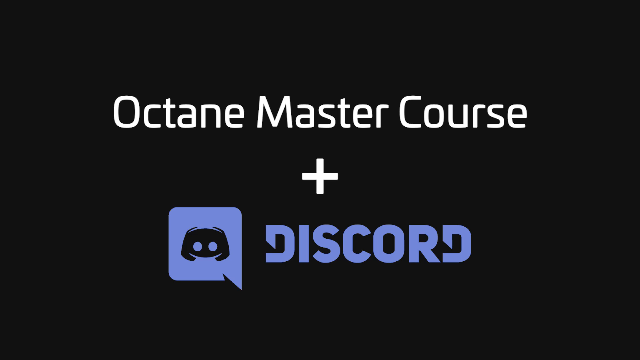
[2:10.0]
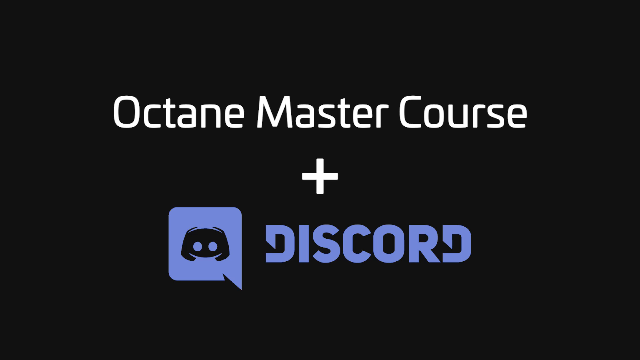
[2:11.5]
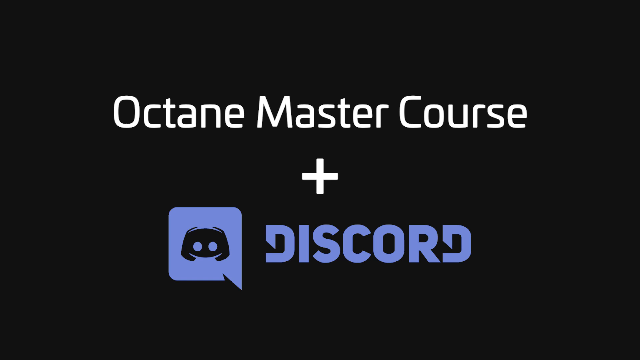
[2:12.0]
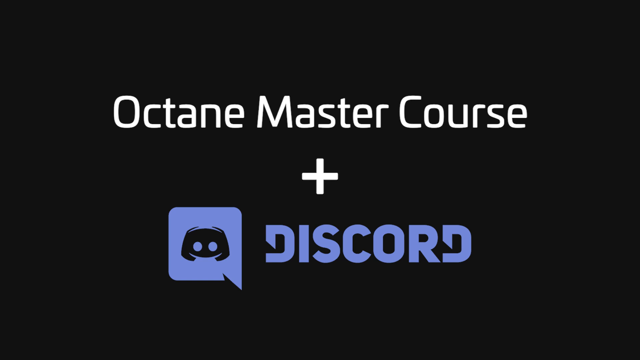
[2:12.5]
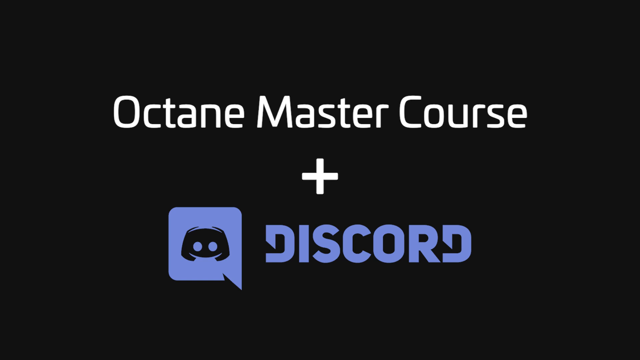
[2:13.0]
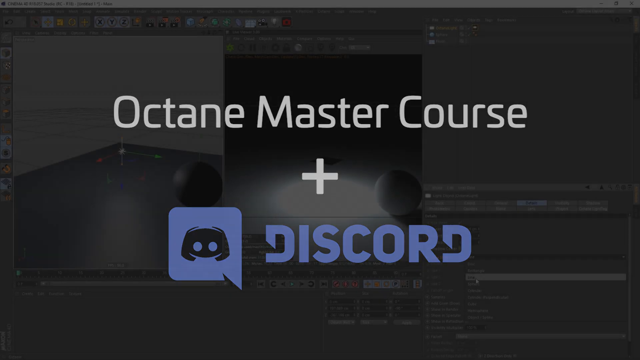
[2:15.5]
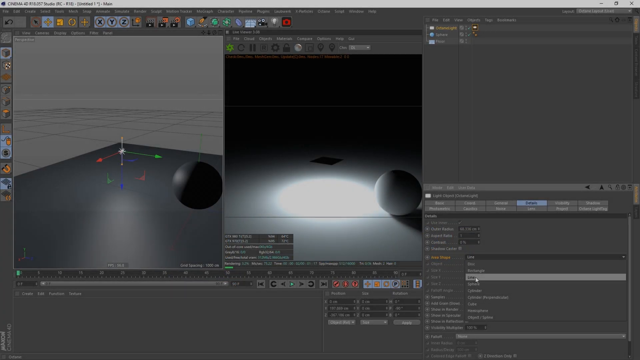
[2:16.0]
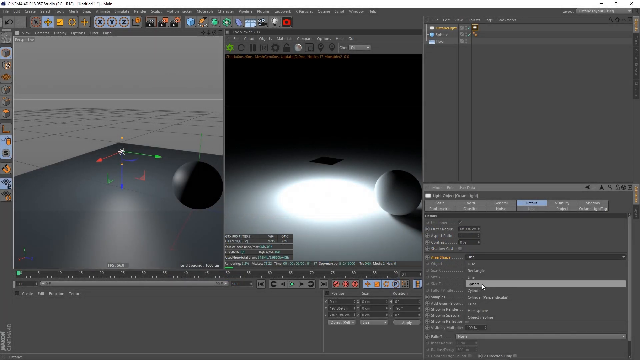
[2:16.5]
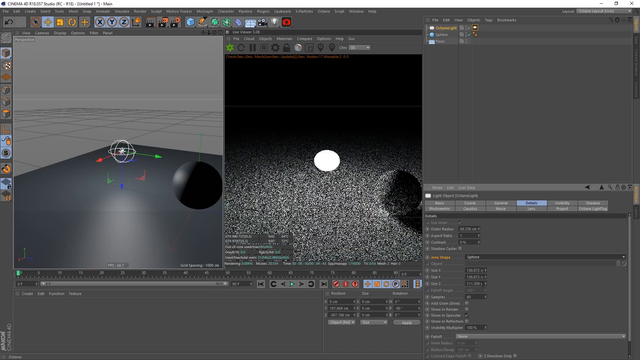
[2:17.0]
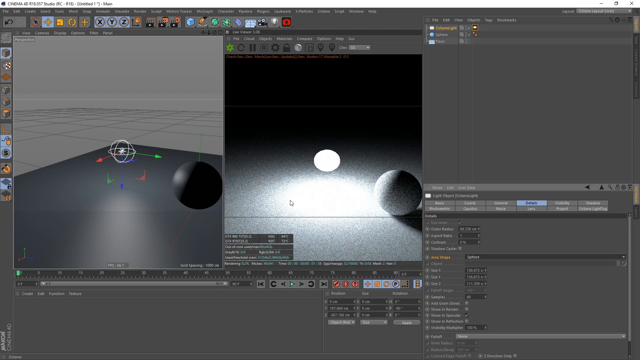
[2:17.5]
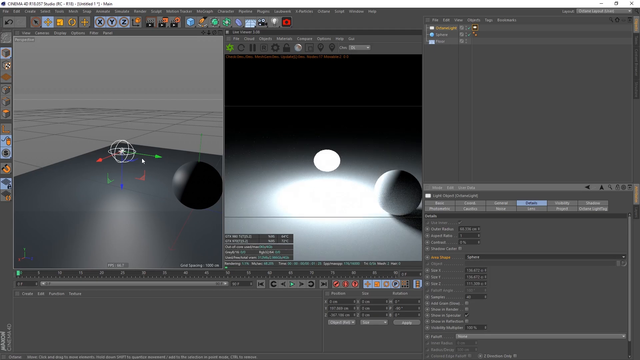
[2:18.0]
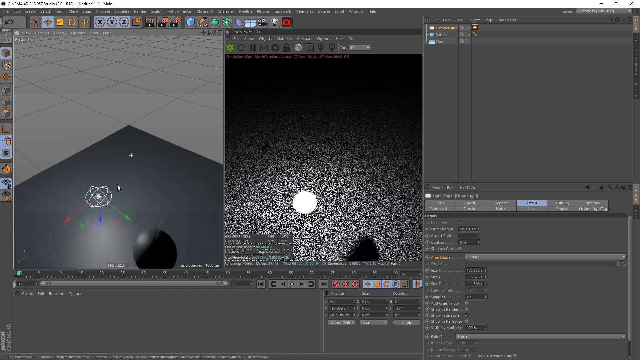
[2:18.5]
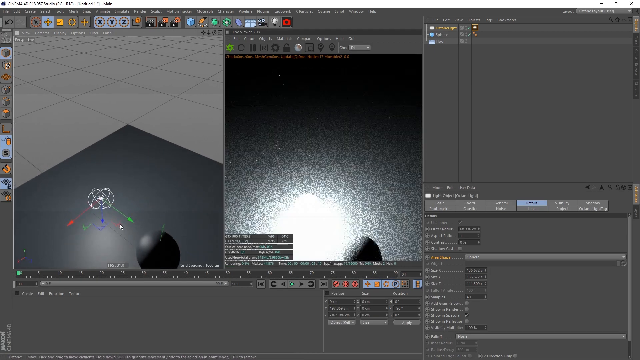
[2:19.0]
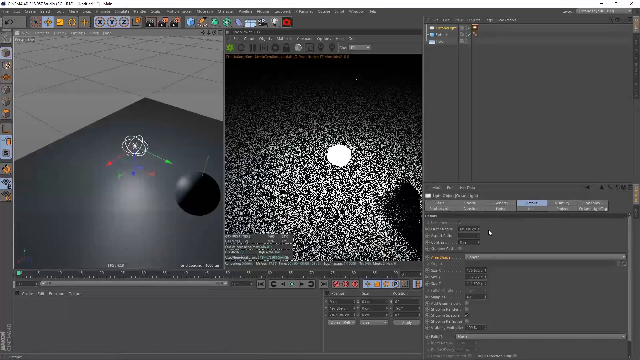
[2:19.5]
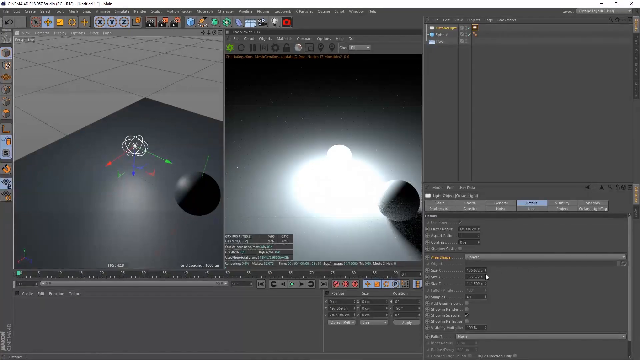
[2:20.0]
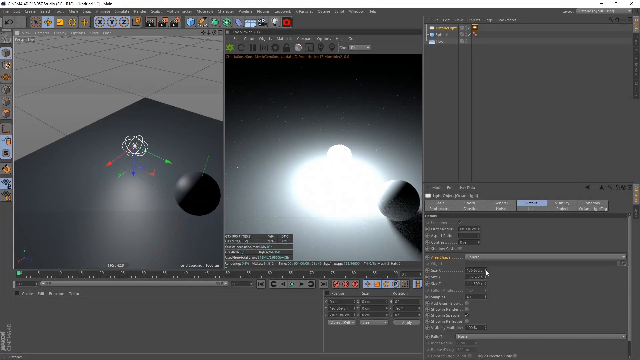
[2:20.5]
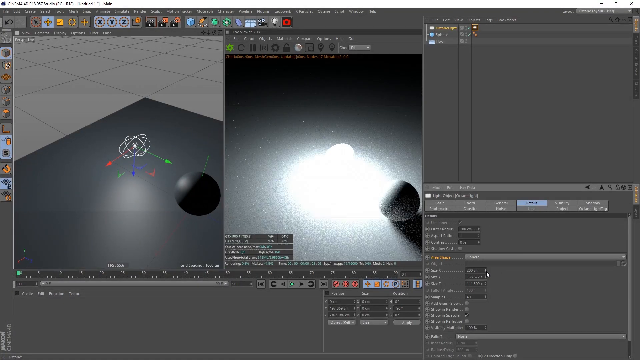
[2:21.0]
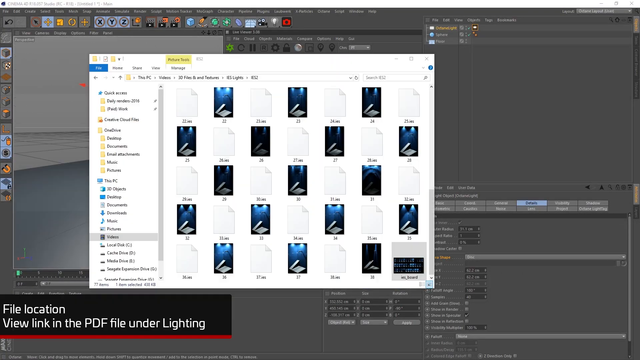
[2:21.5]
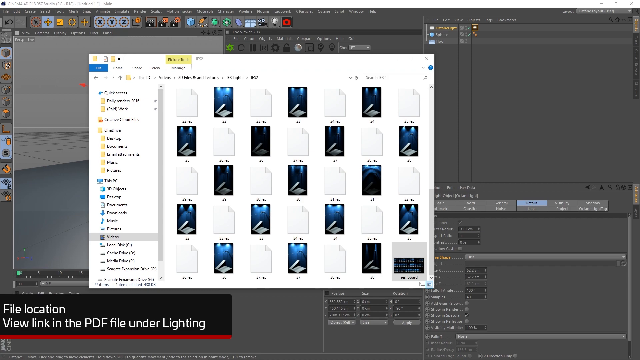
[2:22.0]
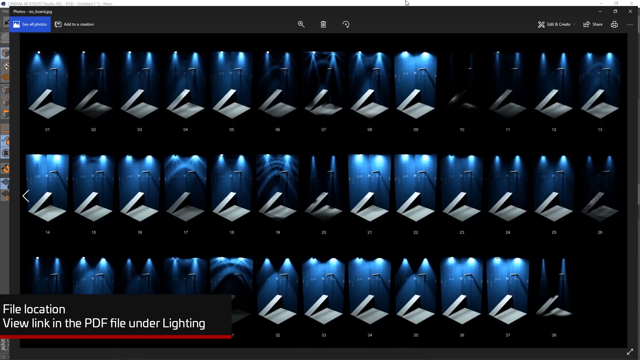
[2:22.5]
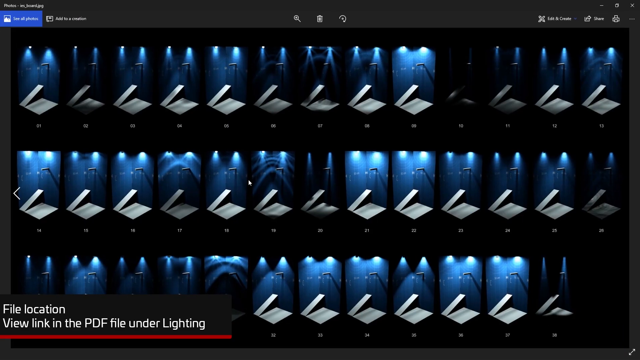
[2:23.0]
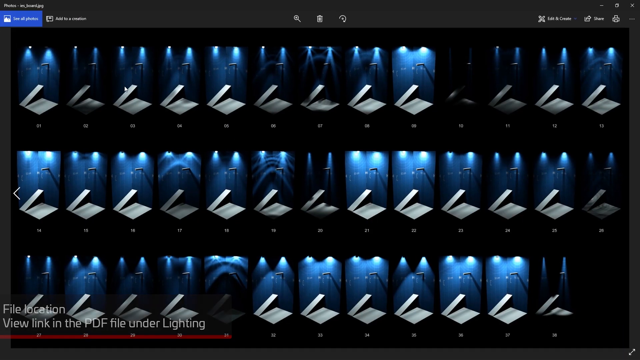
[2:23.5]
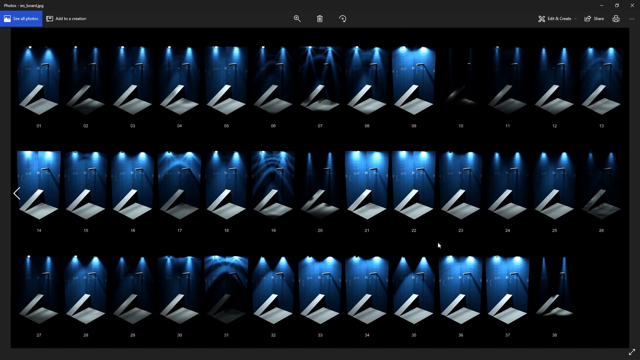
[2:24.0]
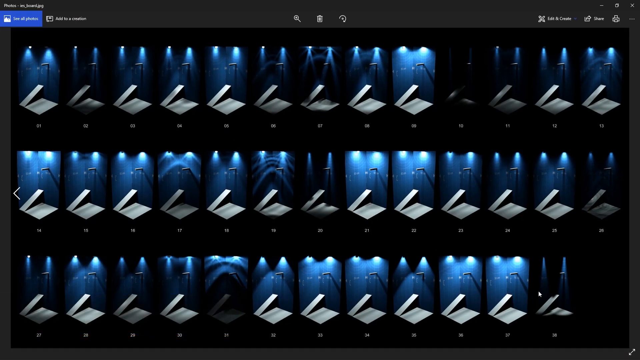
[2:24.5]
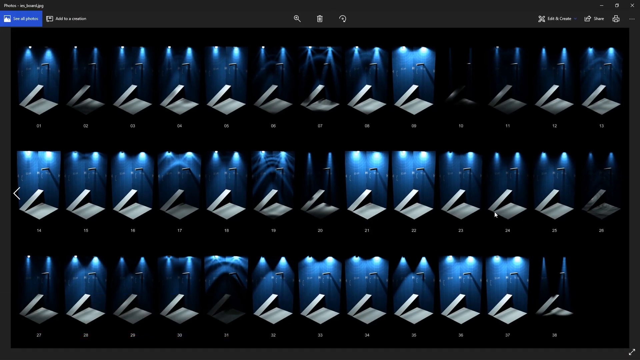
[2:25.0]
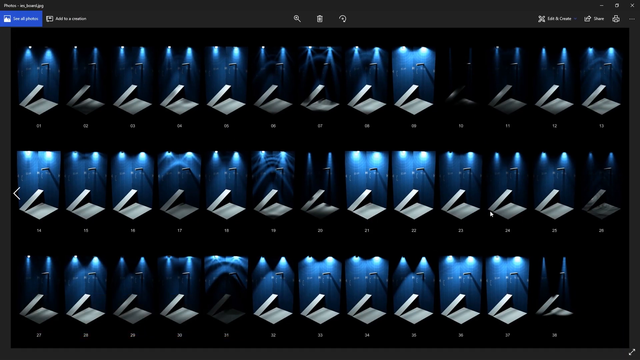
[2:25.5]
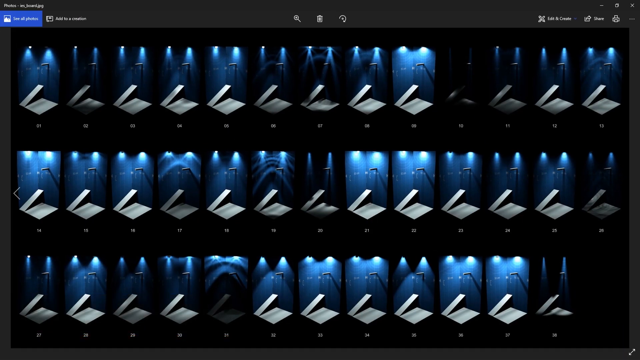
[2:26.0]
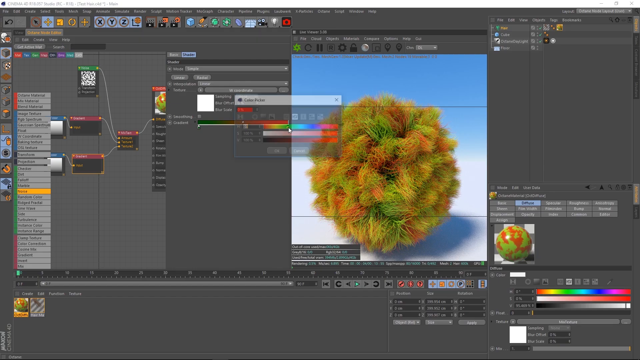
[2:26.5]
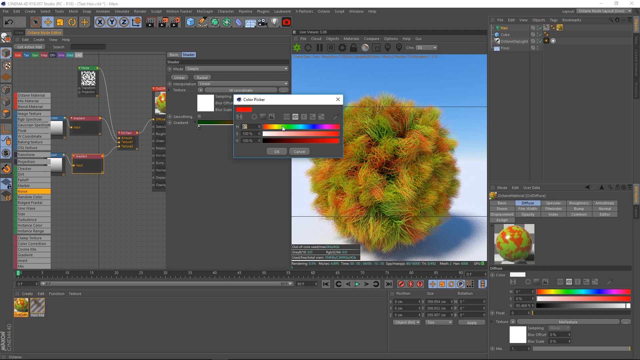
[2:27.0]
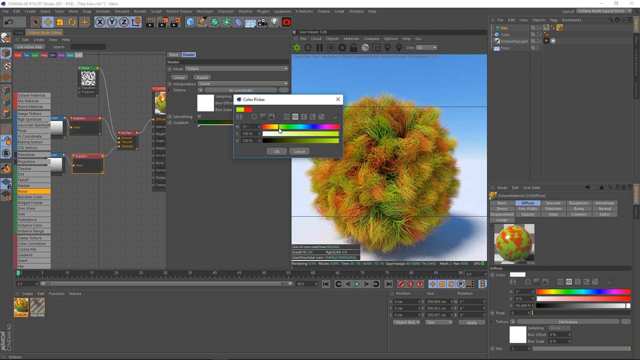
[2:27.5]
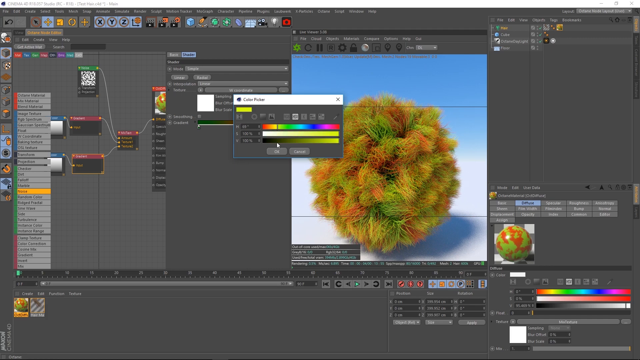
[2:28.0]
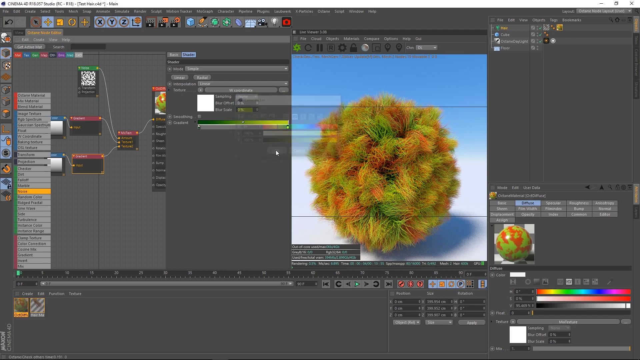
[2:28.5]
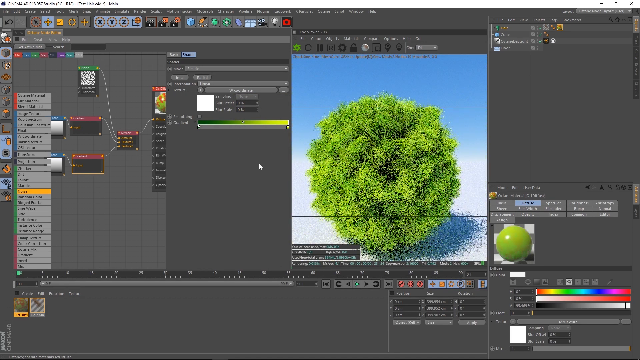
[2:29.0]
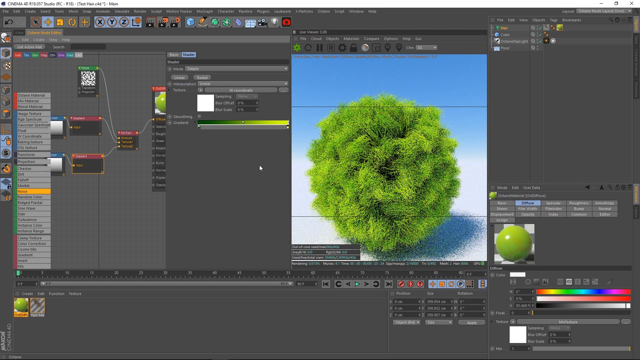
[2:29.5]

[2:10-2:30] "Octane Master Course" plus Discord remains on the screen in front of the dark gray background, then fades away to Cinema 4D once again. Another object is being created on the left side, and this time a light is being added to the image, while the rendered version is still visible in the center of the screen. The light is adjusted and placed on a flooring with a black ball or sphere sitting on it; as the lighting is added, it appears on the rendered version. Files are then opened to show an image of different lighting types, listed beside each other with different labels. The screen goes back to Cinema 4D, showing a render of a very fluffy-looking ball. Its colors are changed live on the screen: it was orange and green, and now it is all green, like a grass or tree color.